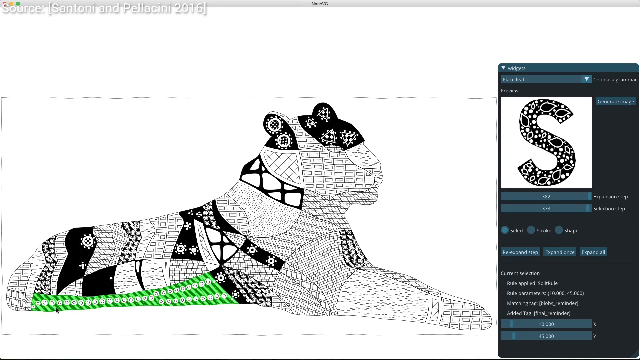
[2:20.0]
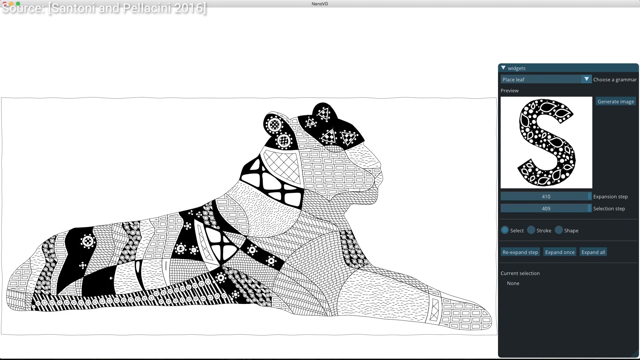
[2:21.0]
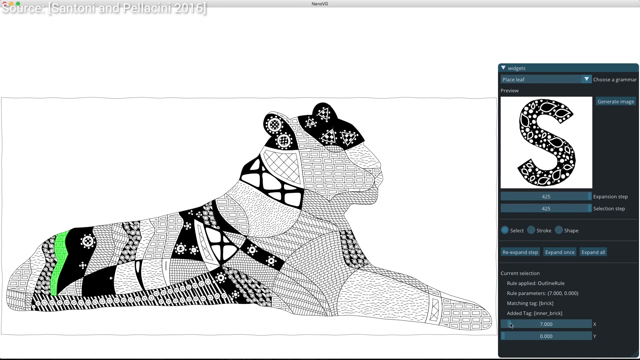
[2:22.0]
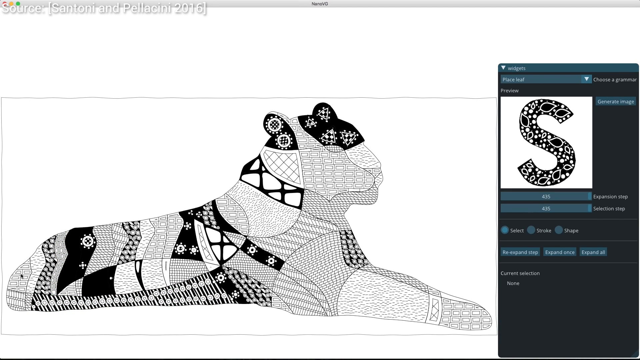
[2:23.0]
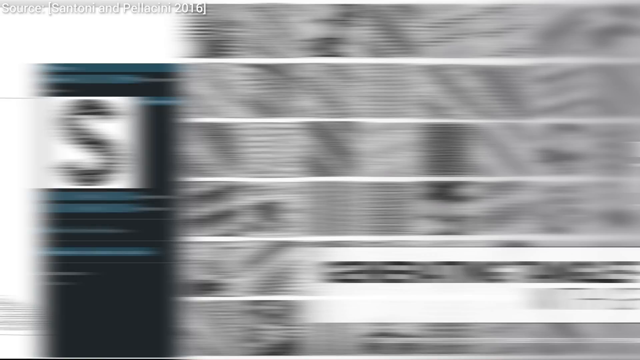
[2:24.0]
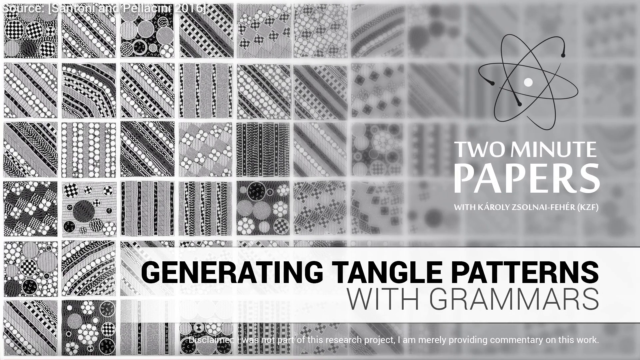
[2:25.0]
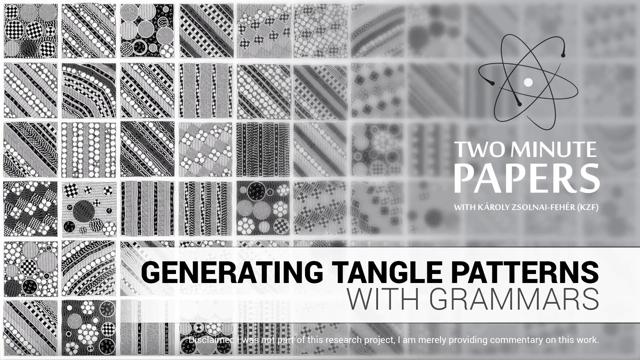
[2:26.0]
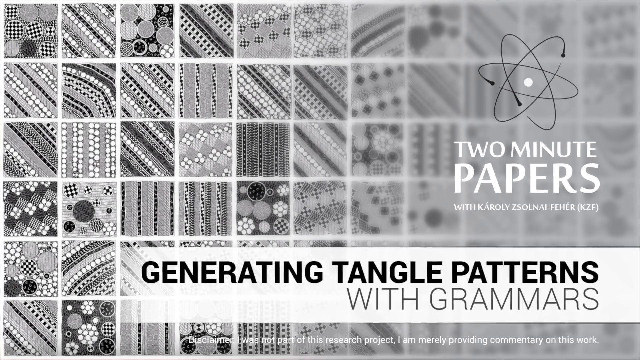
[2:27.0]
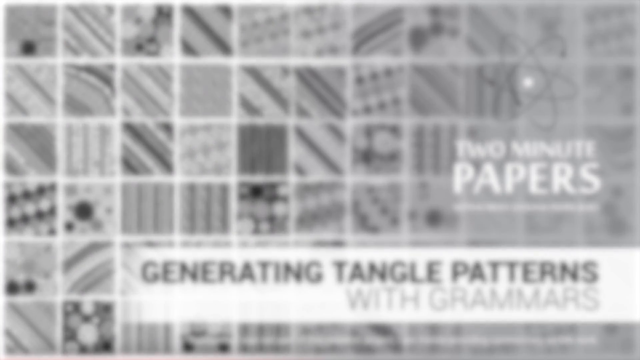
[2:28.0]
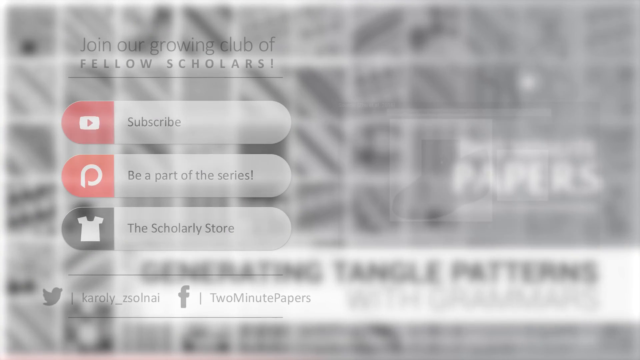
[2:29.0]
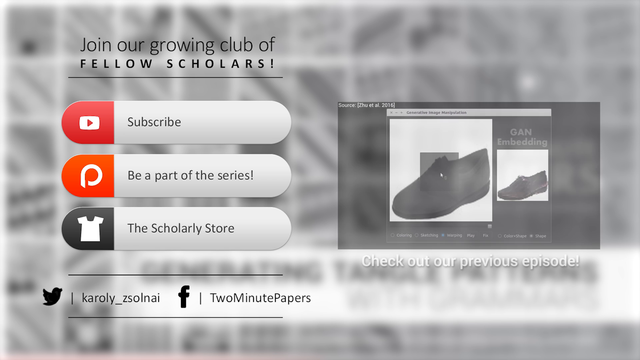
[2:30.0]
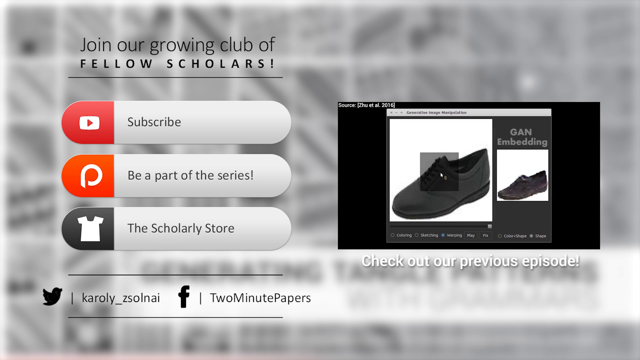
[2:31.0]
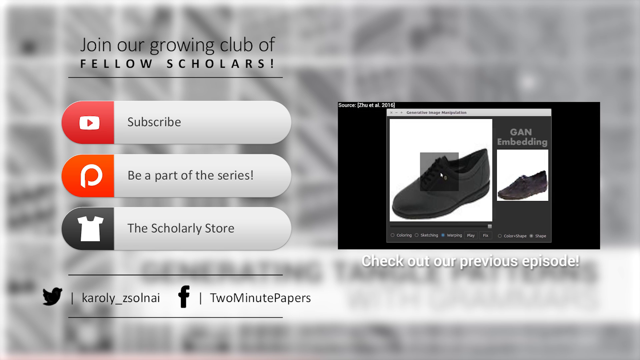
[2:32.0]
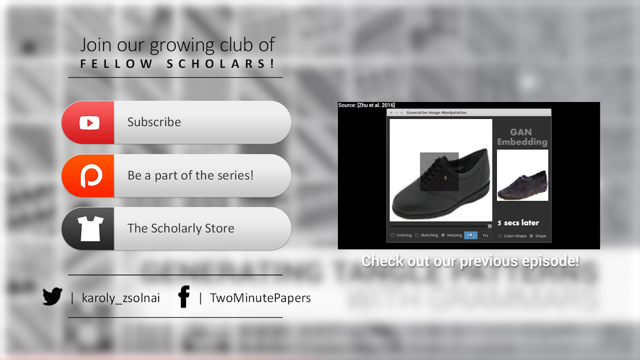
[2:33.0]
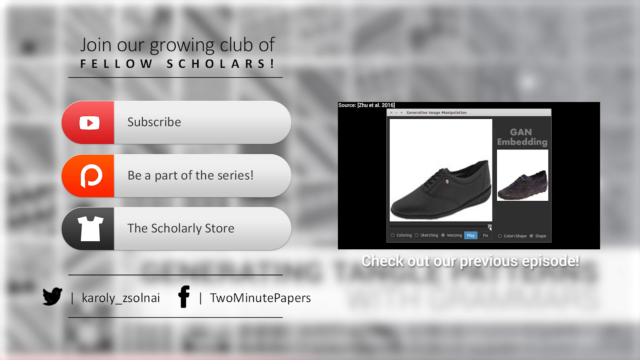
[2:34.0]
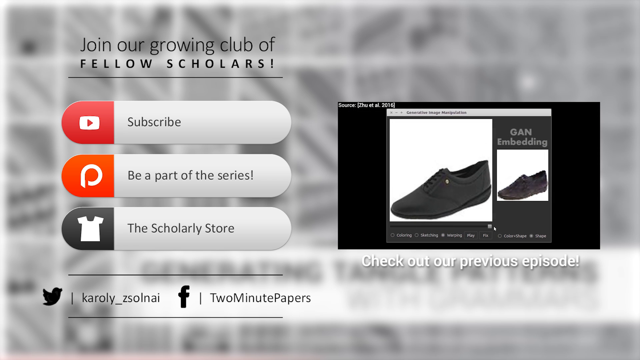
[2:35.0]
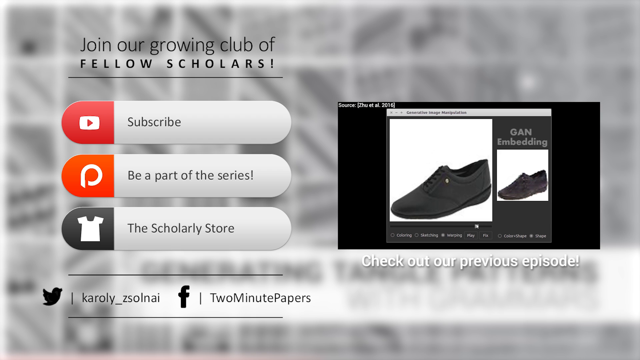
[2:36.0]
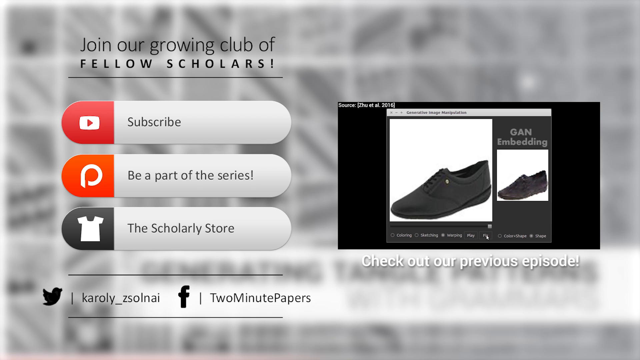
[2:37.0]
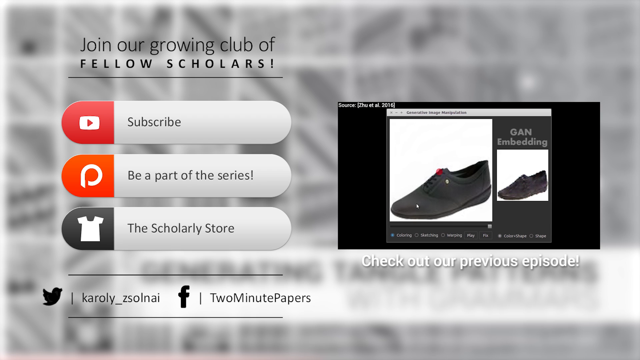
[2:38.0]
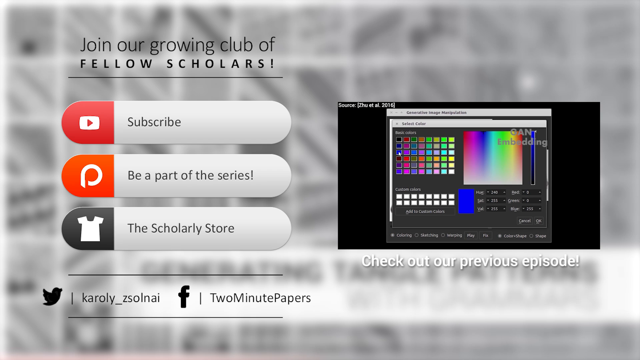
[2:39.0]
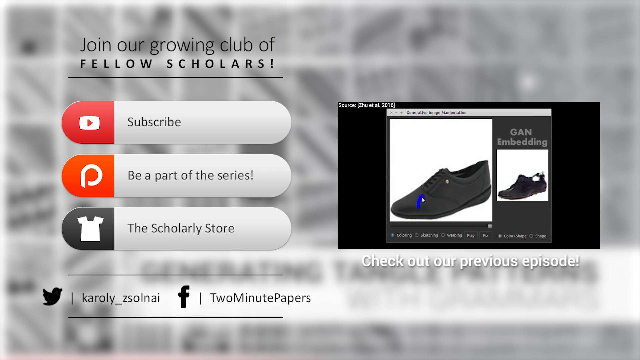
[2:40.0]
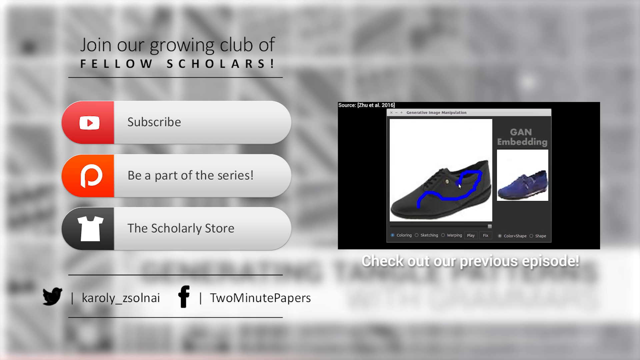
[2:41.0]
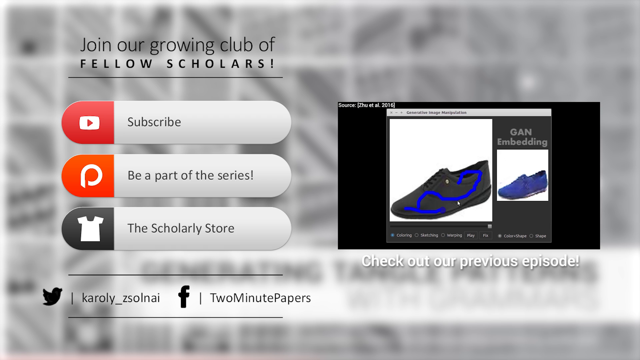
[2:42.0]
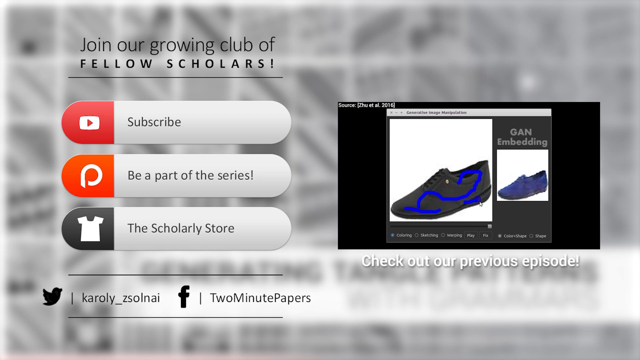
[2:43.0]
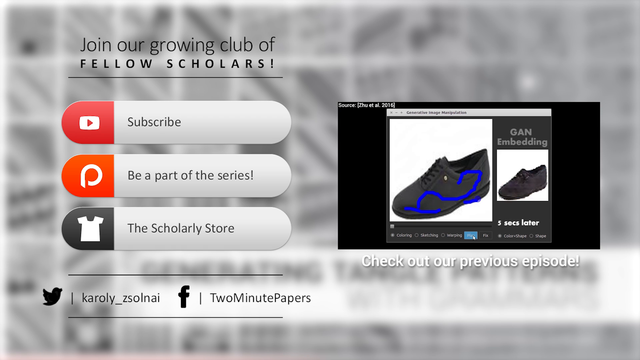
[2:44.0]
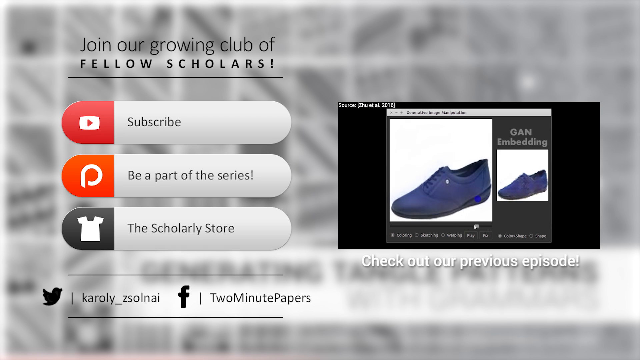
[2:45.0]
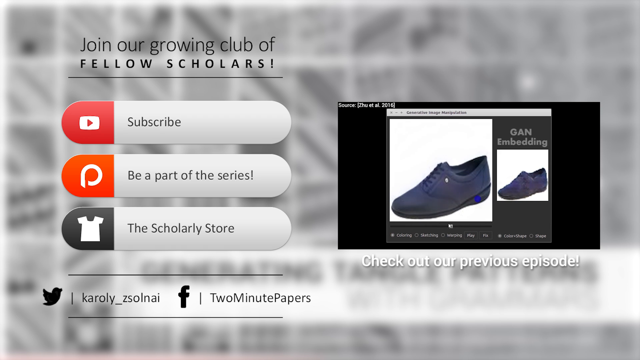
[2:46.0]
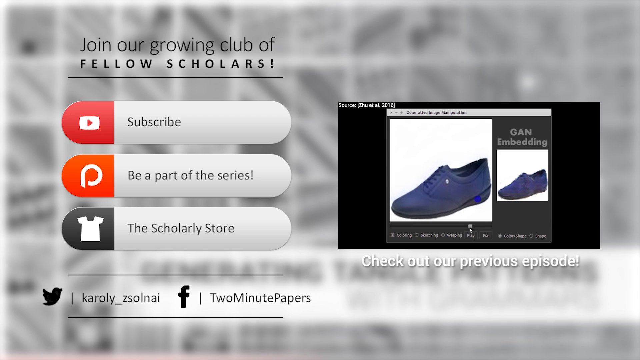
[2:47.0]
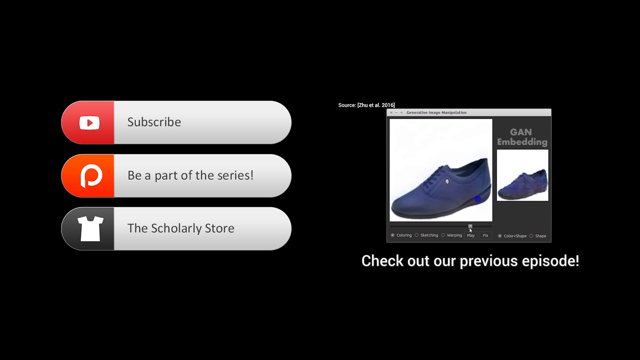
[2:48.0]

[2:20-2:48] The user continues to color the lion. The scene then changes: at the bottom right are the words "Generating Tangle Patterns with Grammars," in the background are many squares with black-and-white shapes on them, and on the right is the label "Two Minute Papers." This is the end screen. On the left side are three links: to subscribe to their YouTube channel, to be a part of the series, and to shop at their scholarly store. In the bottom left corner are links to their Twitter and Facebook accounts. On the right side is what looks like a preview of their previous episode, a video screen in which a user shows how to change the color of a black shoe to make it look like a blue shoe.